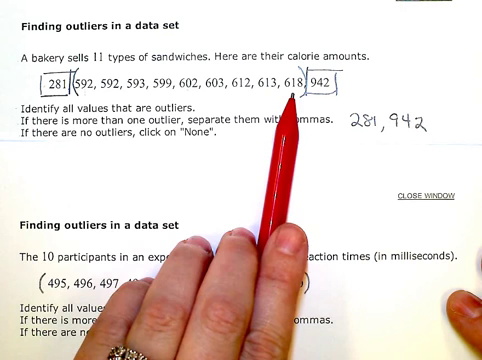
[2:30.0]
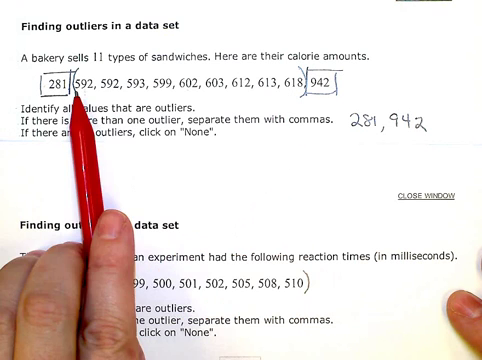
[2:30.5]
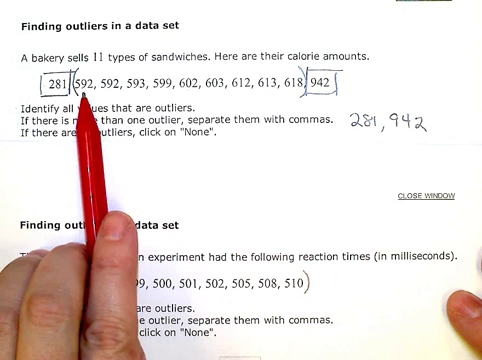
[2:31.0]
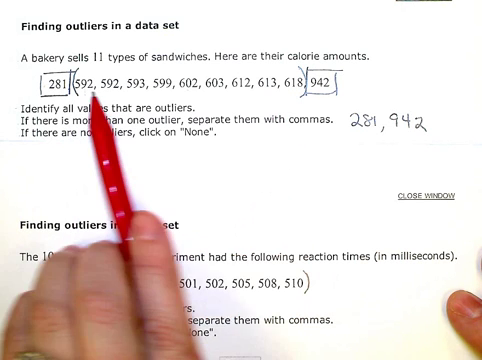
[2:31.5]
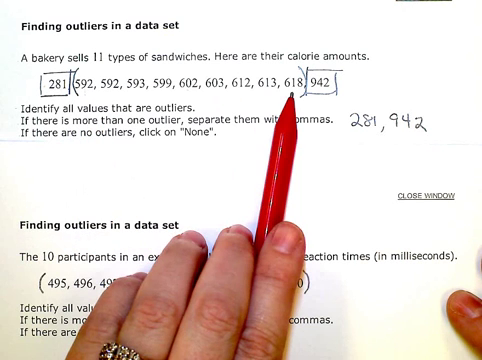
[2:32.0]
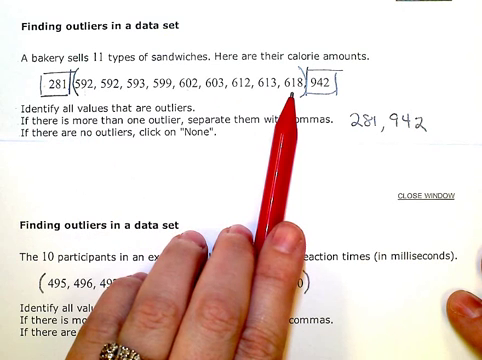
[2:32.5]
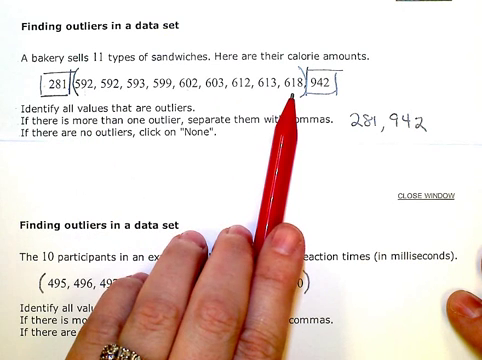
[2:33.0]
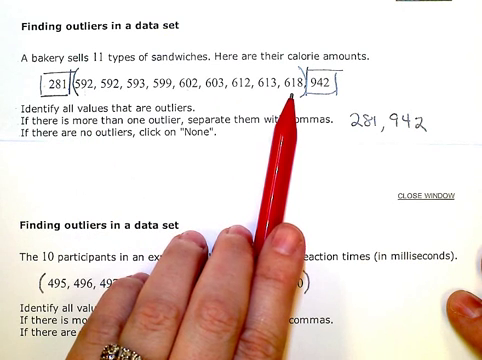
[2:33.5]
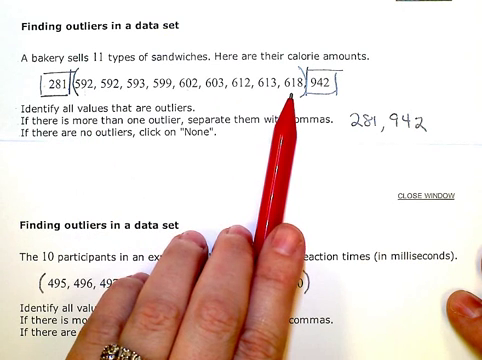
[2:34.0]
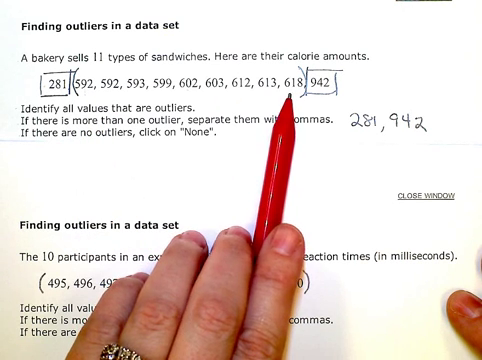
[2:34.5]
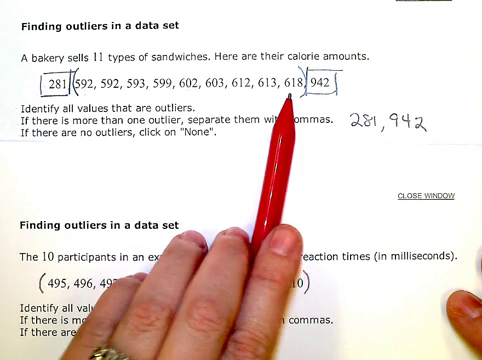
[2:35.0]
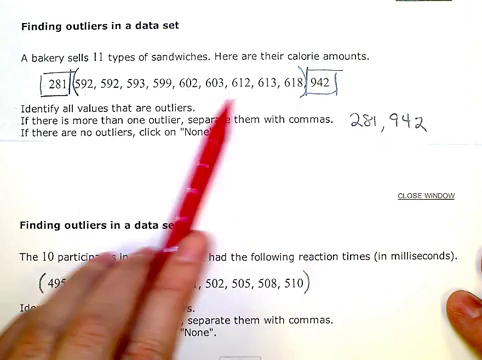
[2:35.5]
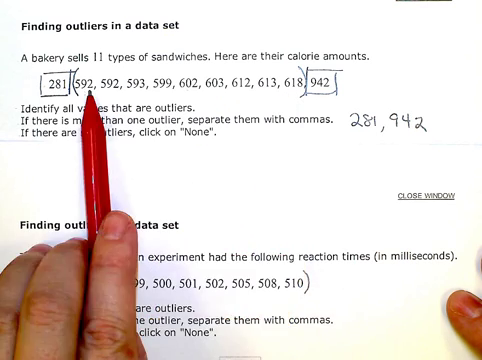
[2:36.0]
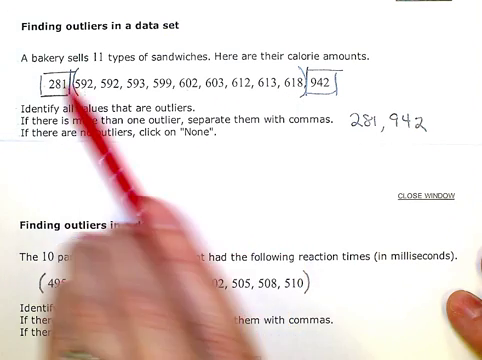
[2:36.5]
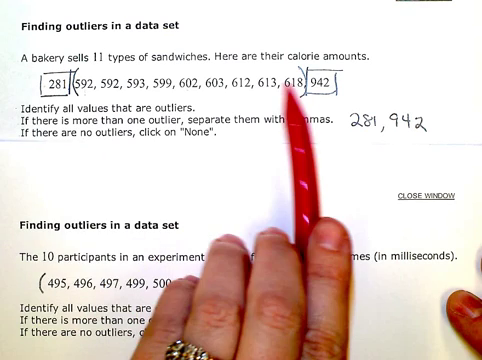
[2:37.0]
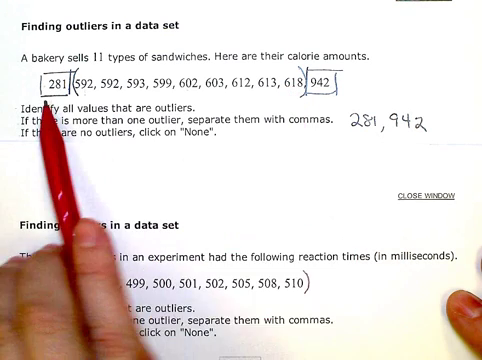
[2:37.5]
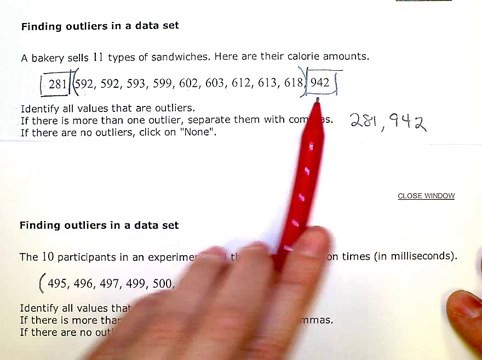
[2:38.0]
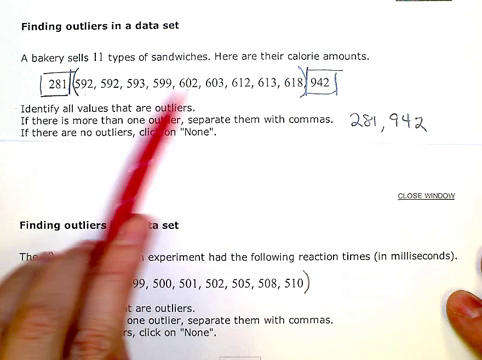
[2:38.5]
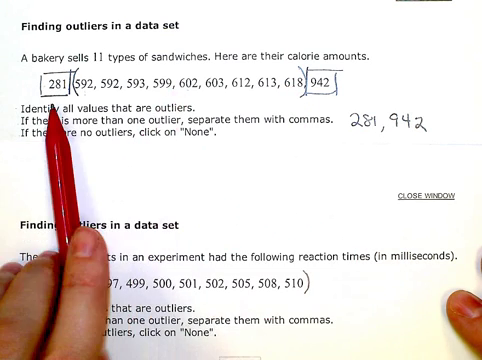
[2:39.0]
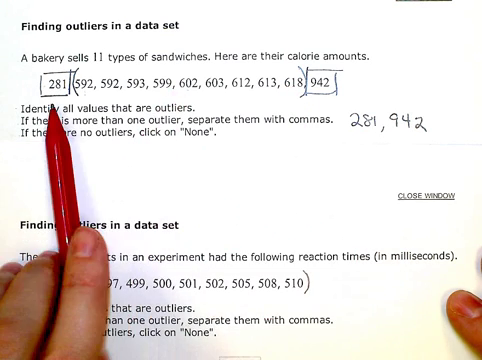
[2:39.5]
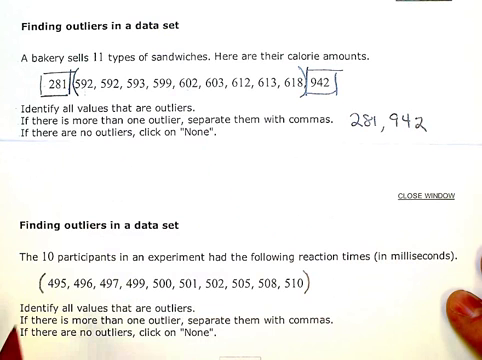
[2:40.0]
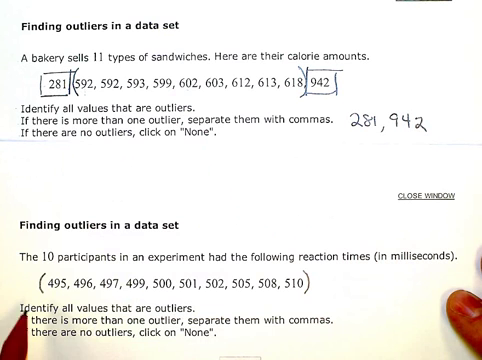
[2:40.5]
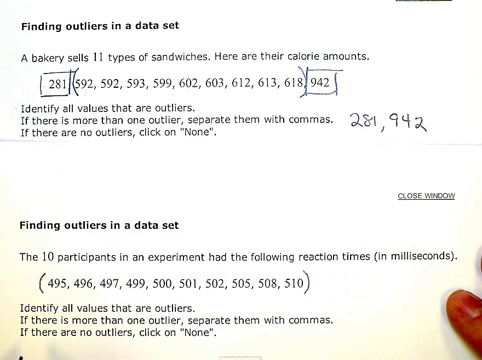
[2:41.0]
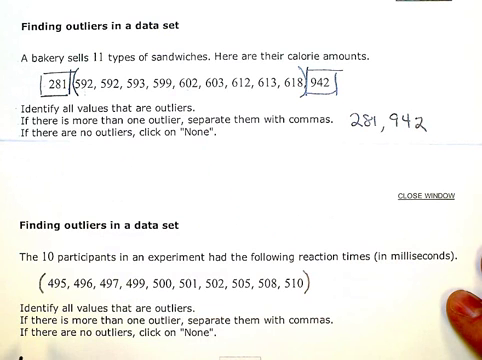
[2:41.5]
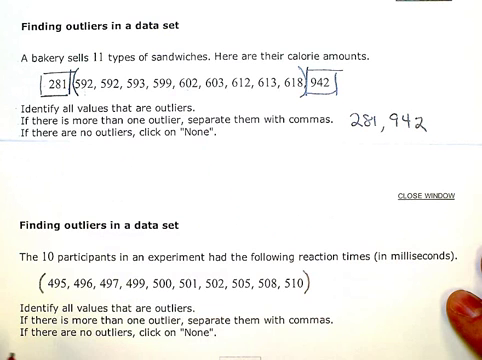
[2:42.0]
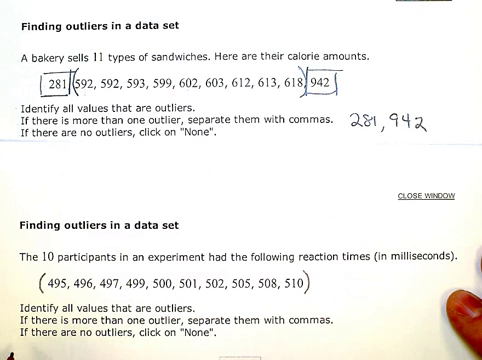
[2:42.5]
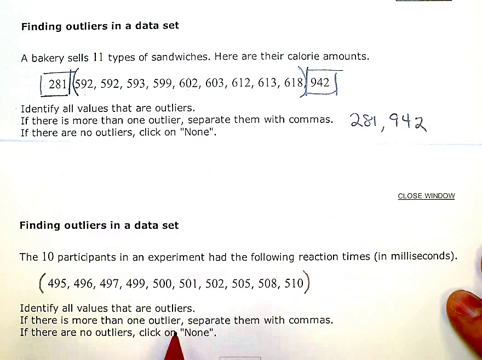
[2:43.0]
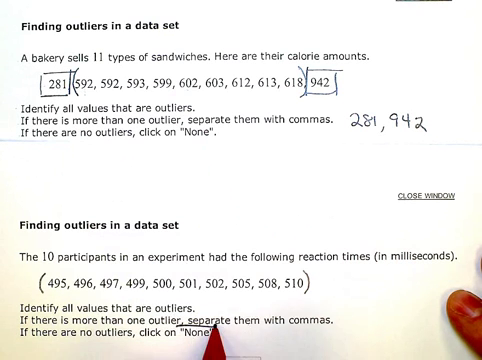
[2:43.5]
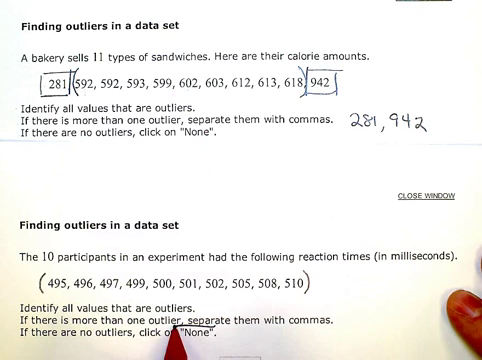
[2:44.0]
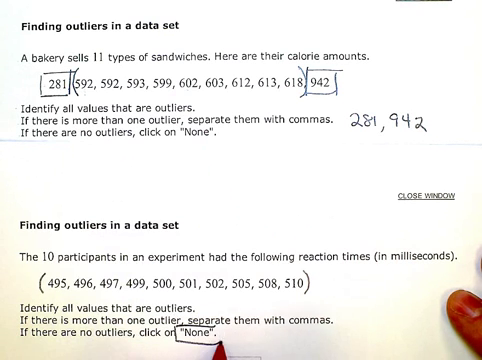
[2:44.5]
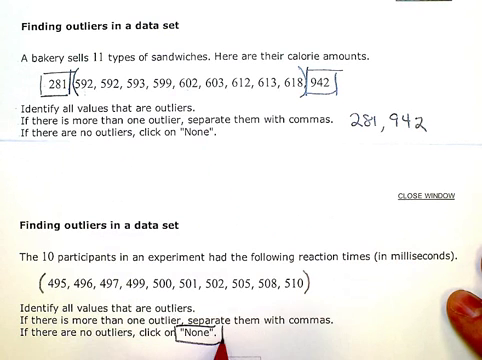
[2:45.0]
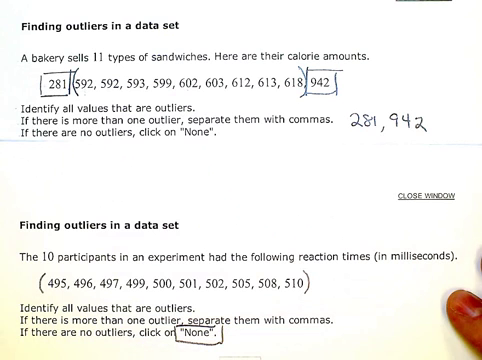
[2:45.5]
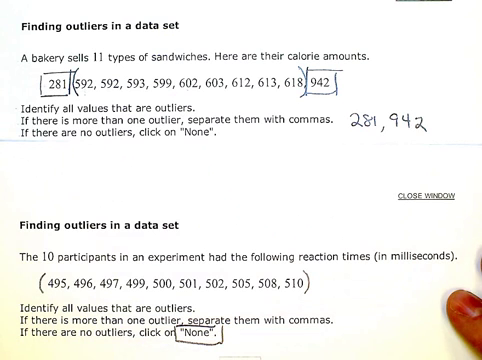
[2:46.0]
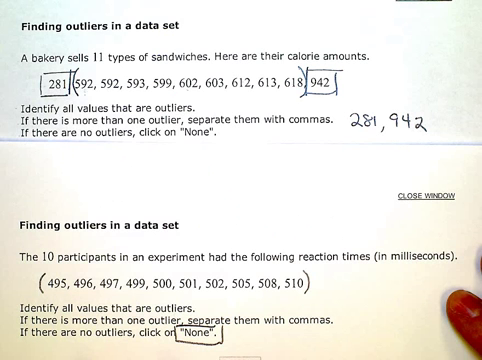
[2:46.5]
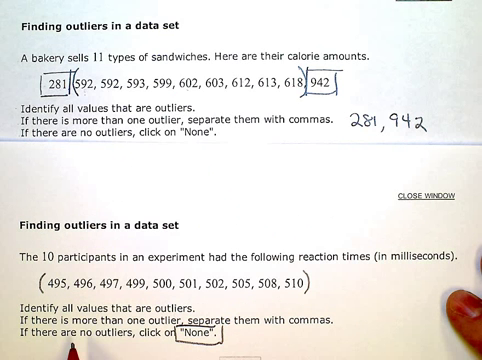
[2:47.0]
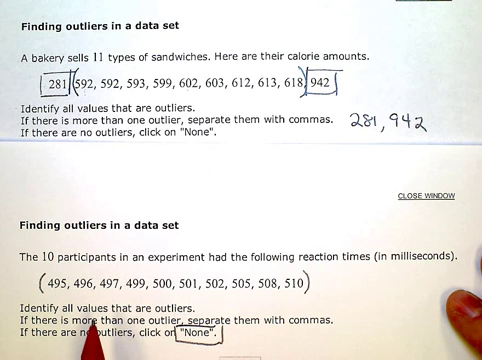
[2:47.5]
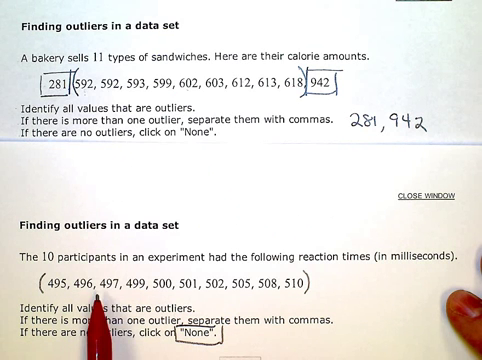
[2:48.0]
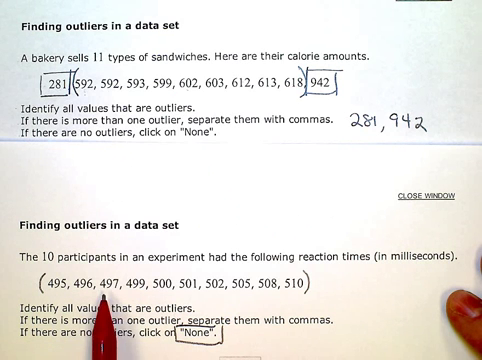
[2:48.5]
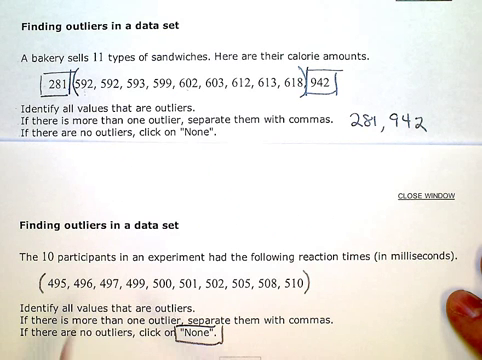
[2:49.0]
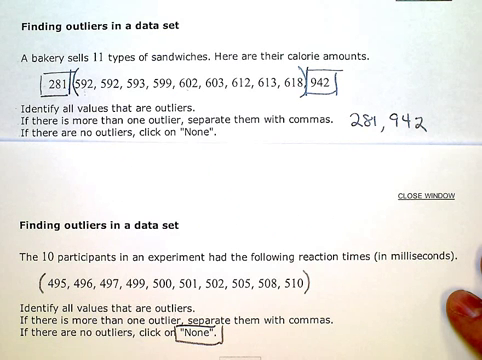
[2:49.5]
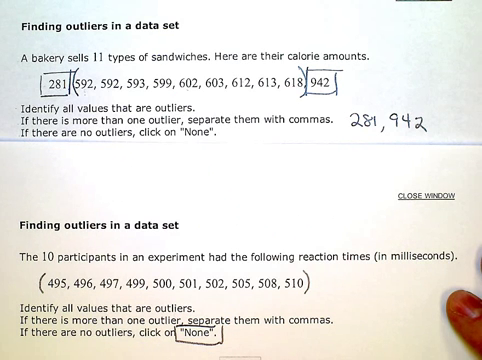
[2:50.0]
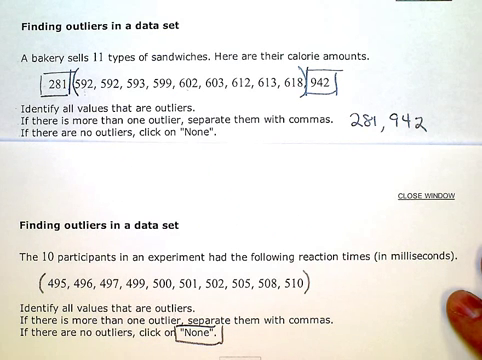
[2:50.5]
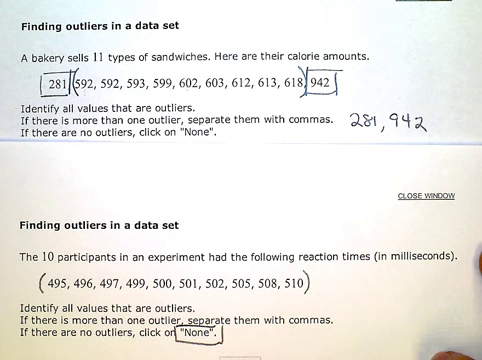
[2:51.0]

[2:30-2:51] The pen is moved swiftly from left to right and is now held as a pointer: the little finger is more curled than the ring finger, which is more curled than the pointing finger, while the index finger is flat and holds the pen in place. The index finger of the right hand is still visible in the bottom corner. The pen goes over question one, apparently while explaining it, and then is taken off the paper completely for several seconds. It reappears from the bottom and moves up to the number 497 in the second array, and the index finger of the right hand moves up against "milliseconds." The first question seems to have been compared with the second as an example of how to solve the second question, which follows the same idea.